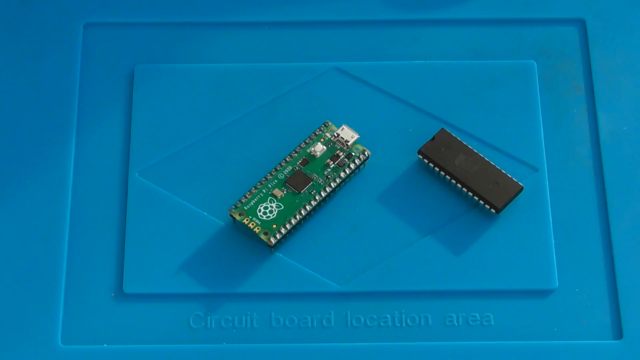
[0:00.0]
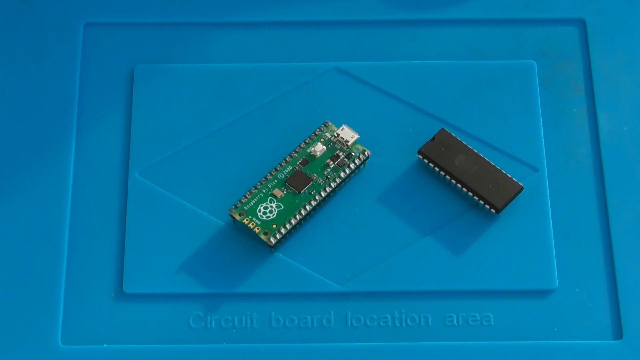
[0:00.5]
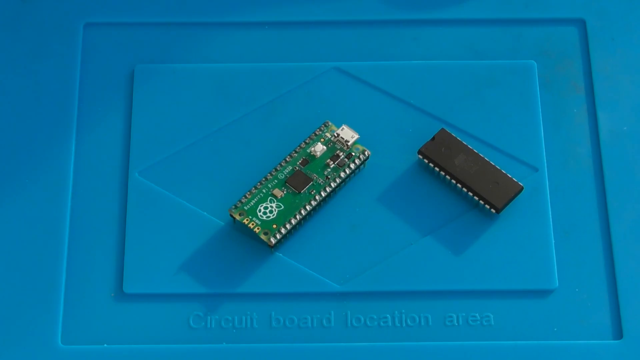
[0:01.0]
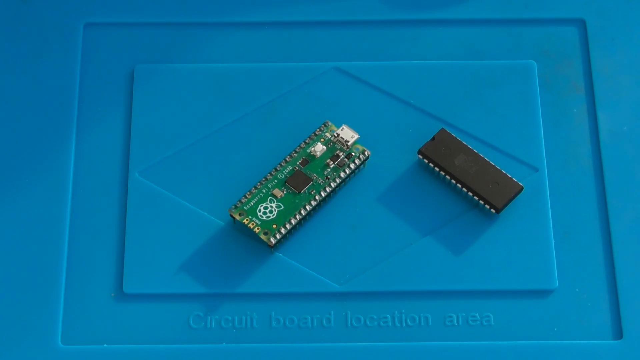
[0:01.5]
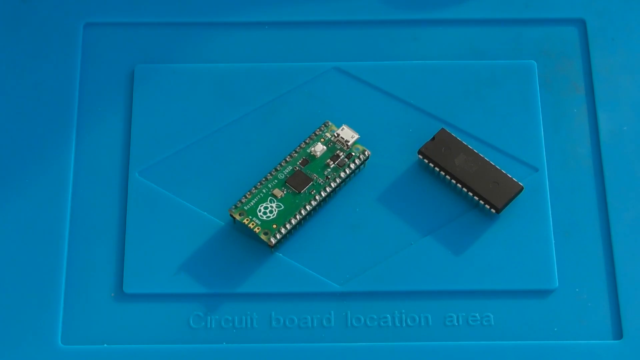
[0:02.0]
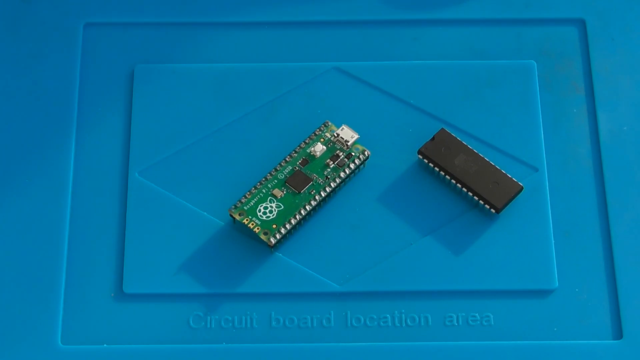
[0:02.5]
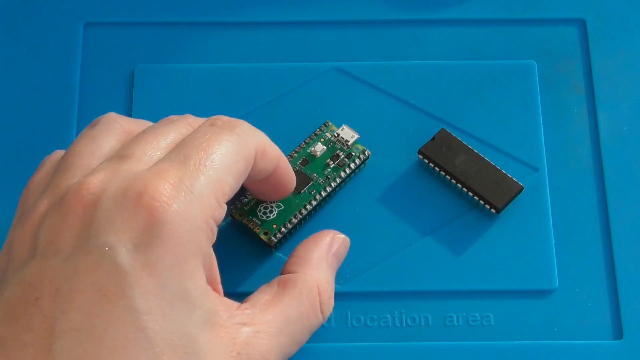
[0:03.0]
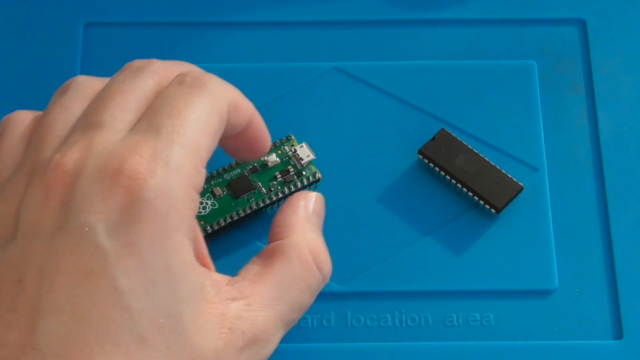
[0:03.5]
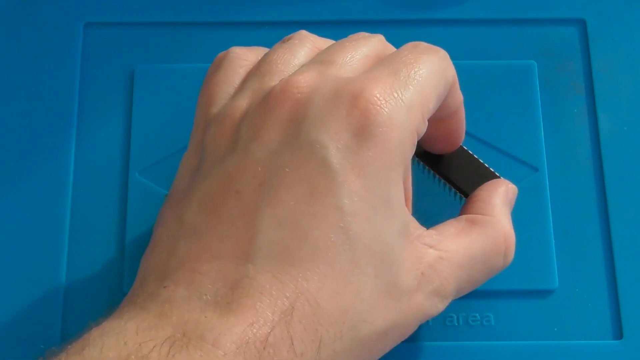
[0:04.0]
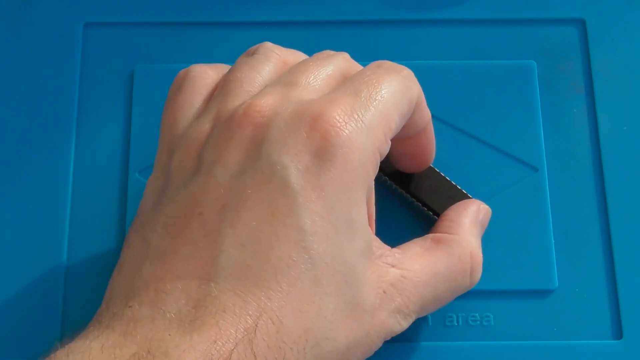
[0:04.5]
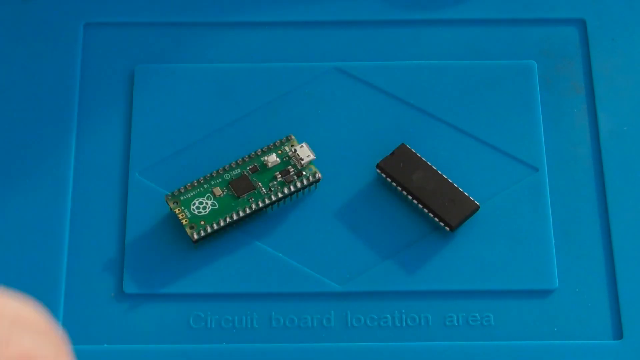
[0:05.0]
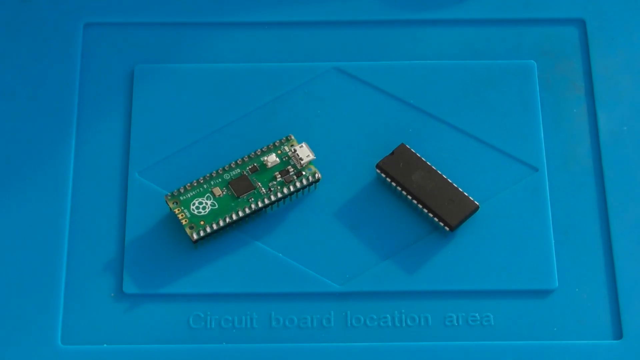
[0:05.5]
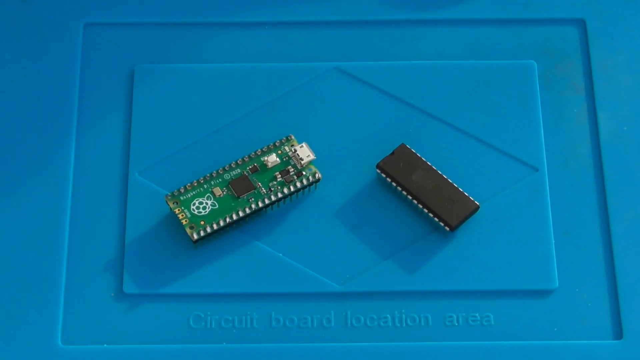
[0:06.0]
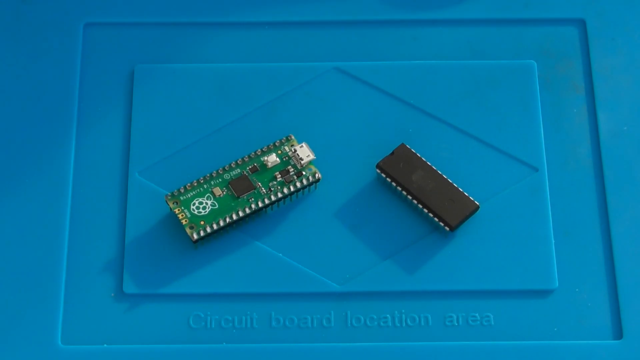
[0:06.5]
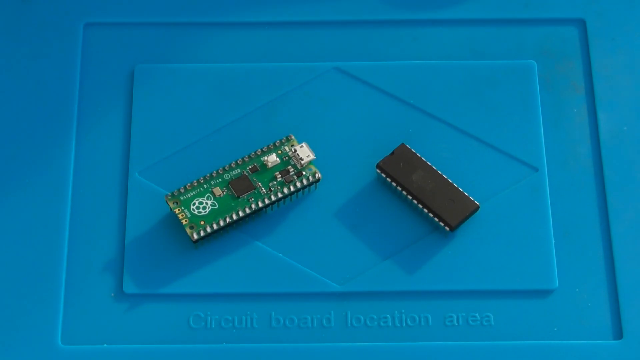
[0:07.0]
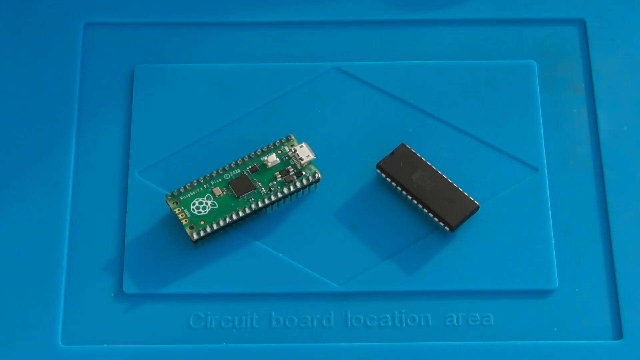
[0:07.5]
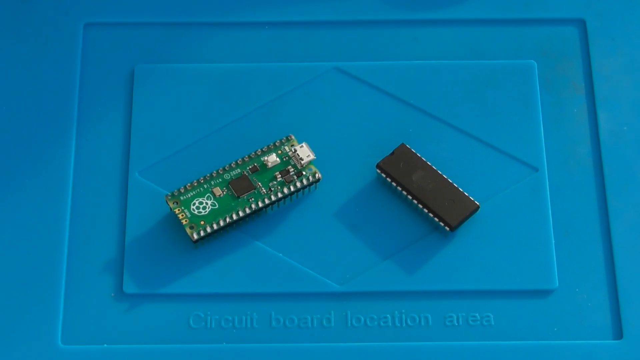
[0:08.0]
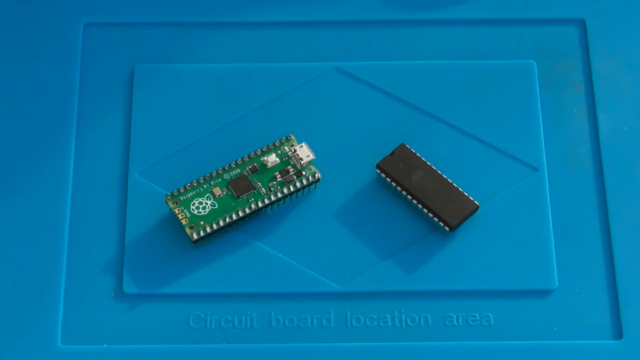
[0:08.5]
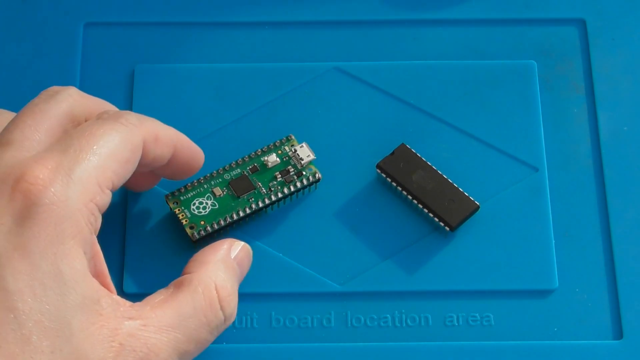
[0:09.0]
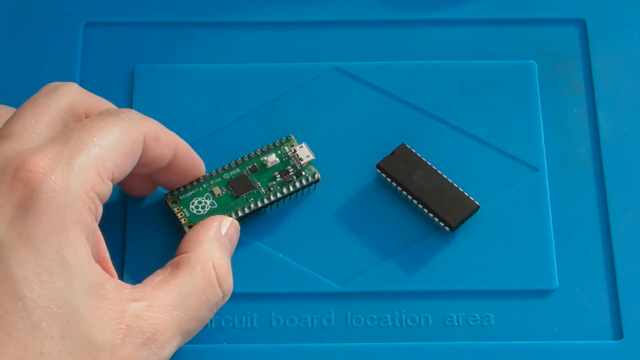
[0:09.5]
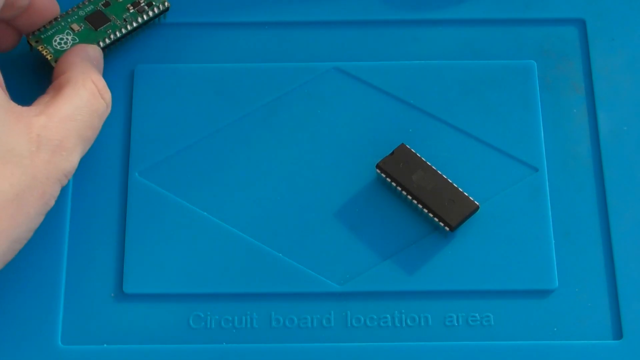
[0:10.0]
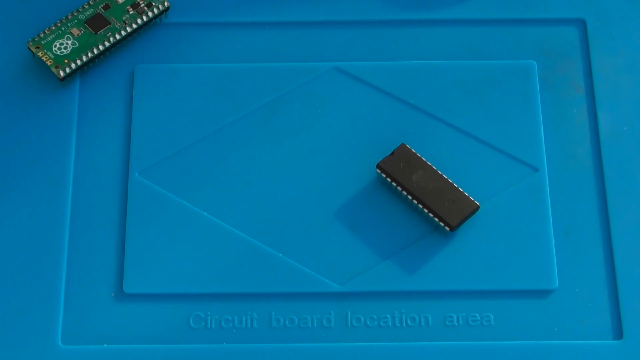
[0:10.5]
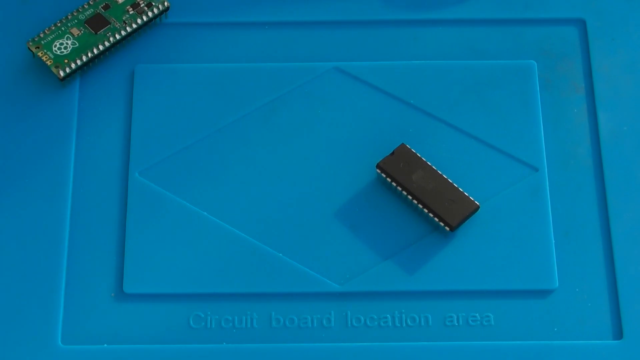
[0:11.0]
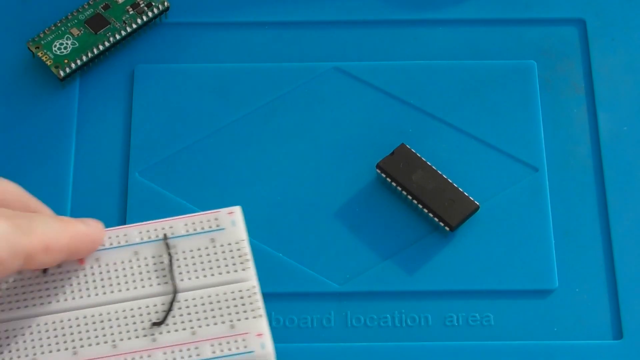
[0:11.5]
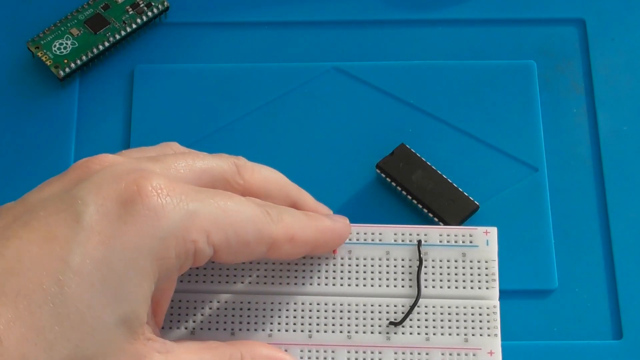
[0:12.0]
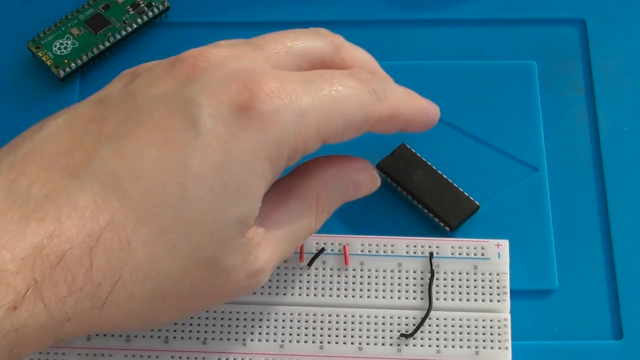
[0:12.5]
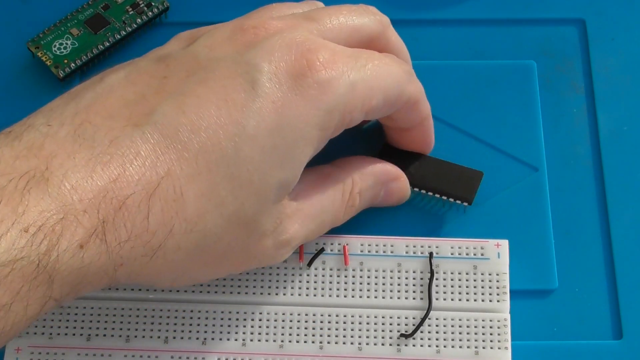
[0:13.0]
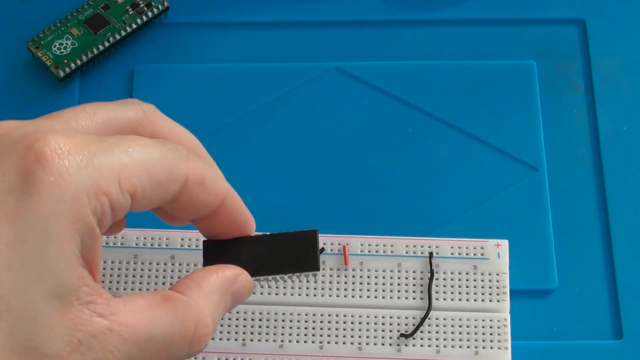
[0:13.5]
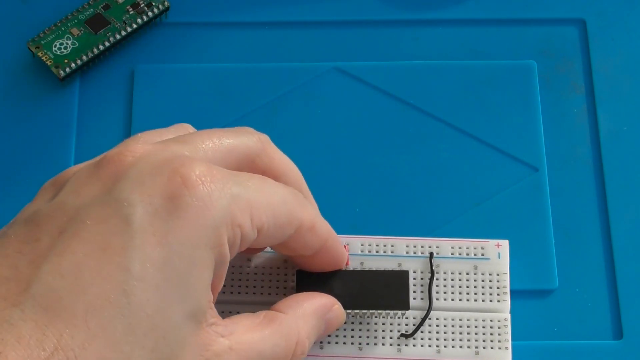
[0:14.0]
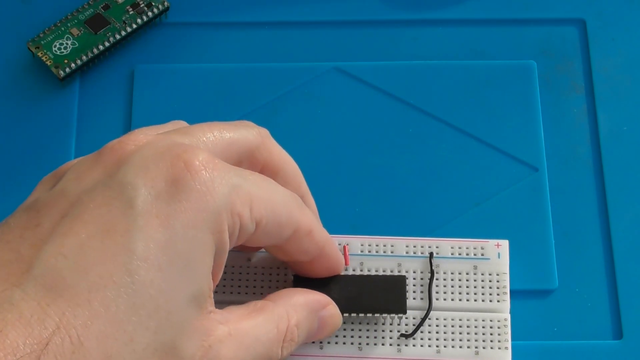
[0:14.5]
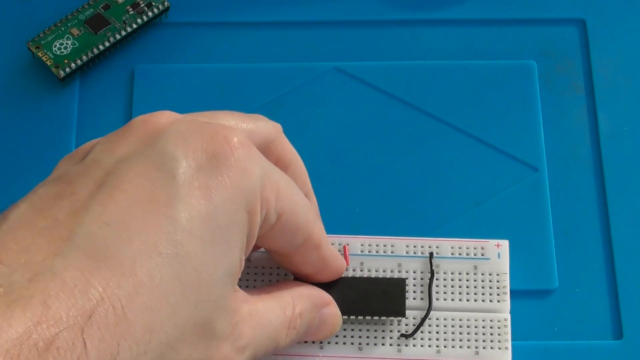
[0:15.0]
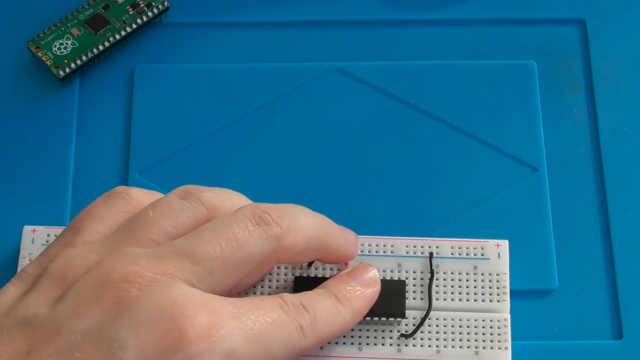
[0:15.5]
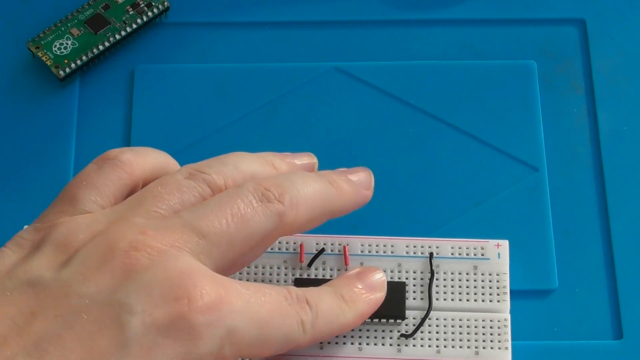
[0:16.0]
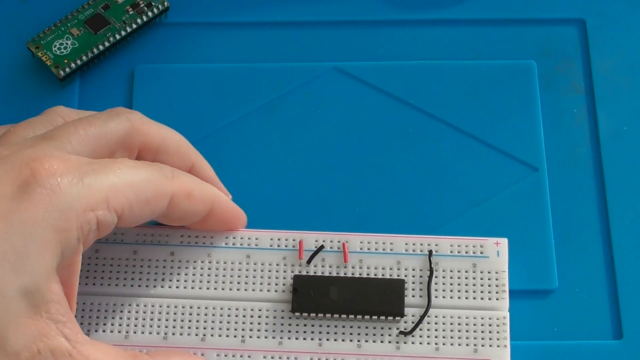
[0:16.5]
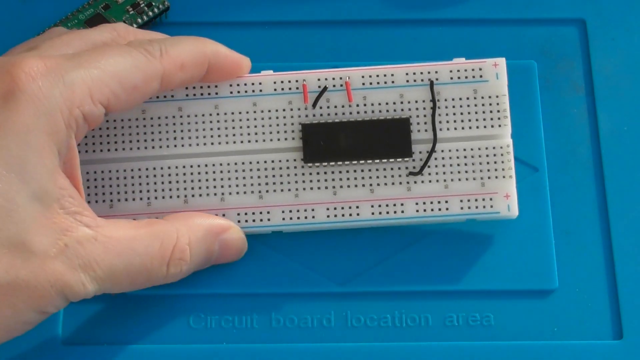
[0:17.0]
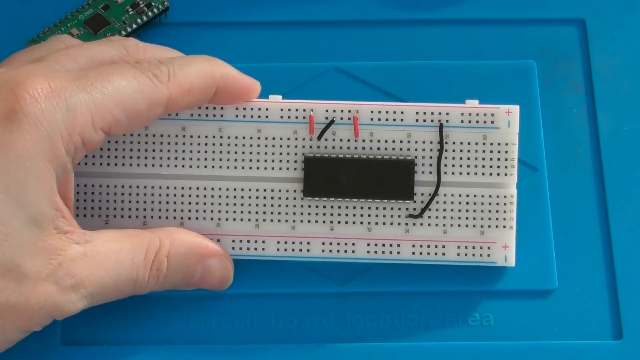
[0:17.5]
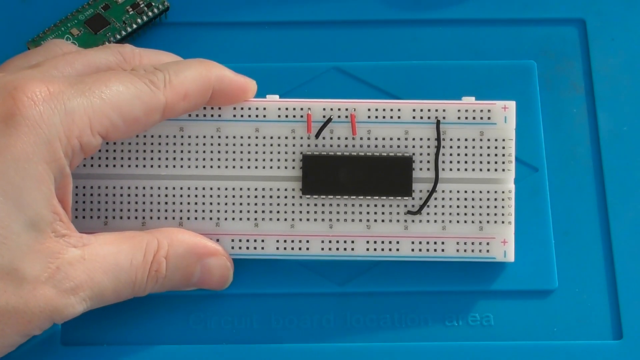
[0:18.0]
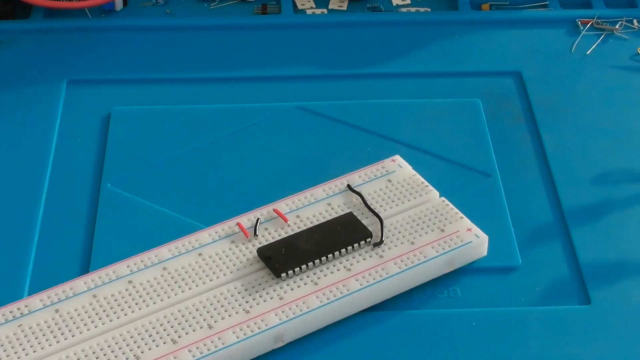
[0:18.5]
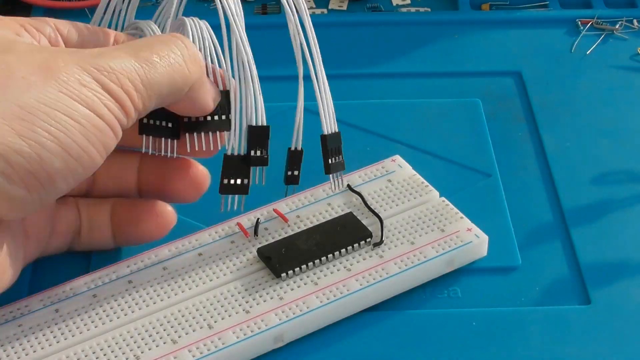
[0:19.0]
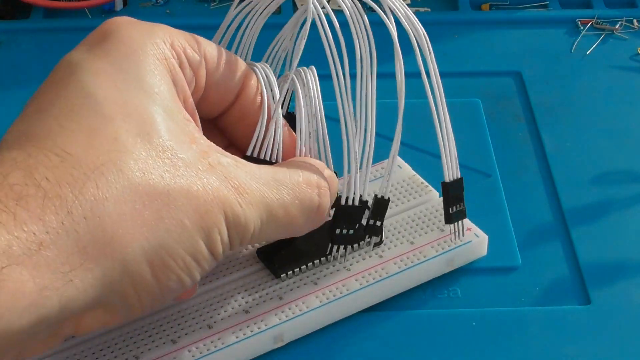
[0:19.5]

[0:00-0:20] Only a man's hands are visible as someone works with devices and connections on a blue table. The hands set one part of a device aside, pick up a very big piece, put another one aside, take another piece and press it on top, then try to connect some other wires on top of it. What is being built is unclear; it looks like something to do with electrical work.